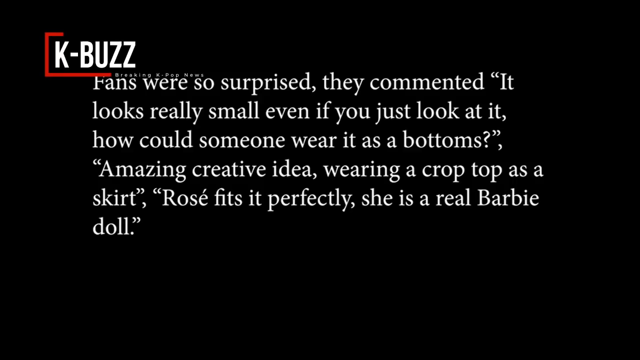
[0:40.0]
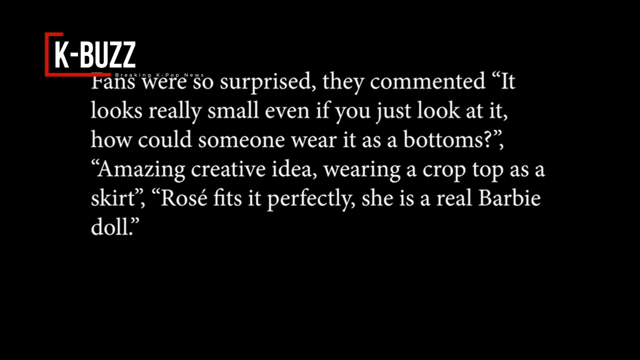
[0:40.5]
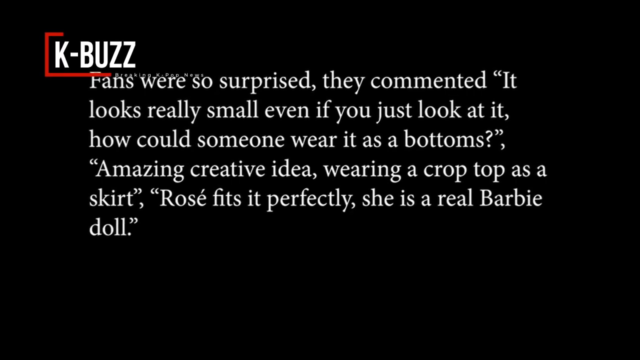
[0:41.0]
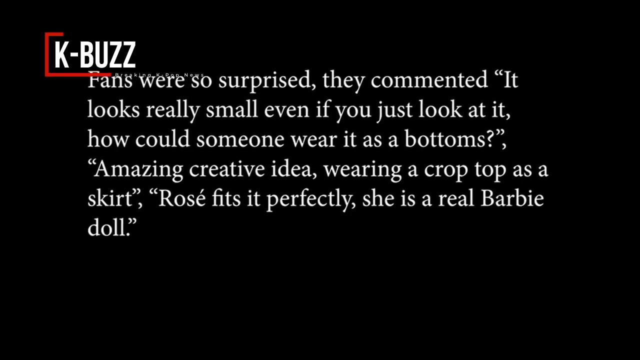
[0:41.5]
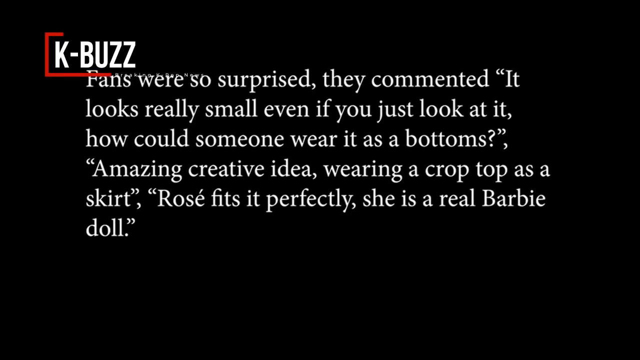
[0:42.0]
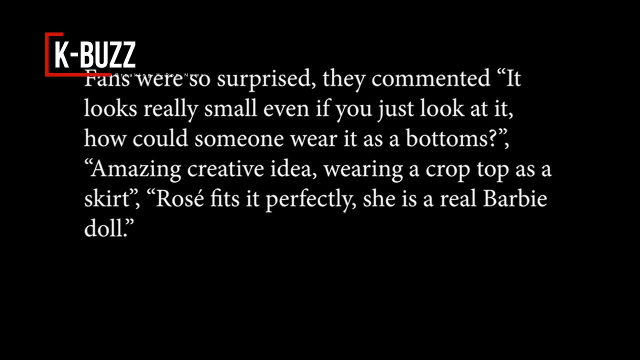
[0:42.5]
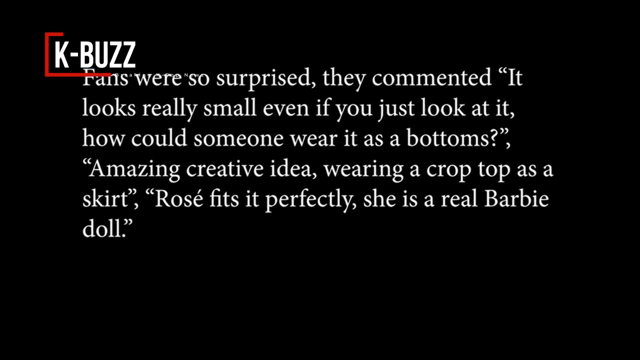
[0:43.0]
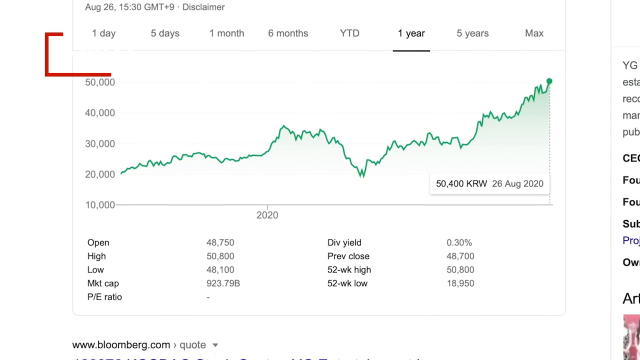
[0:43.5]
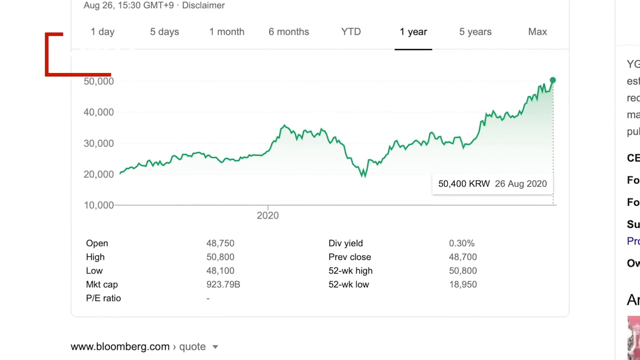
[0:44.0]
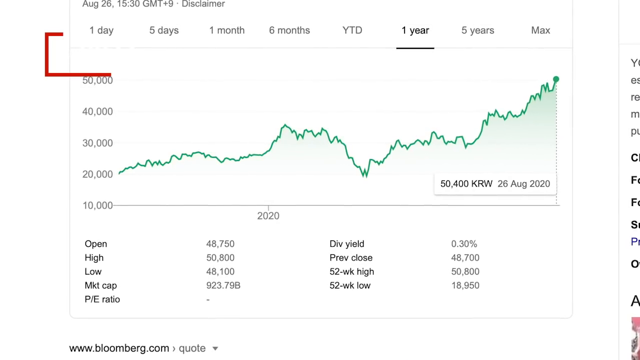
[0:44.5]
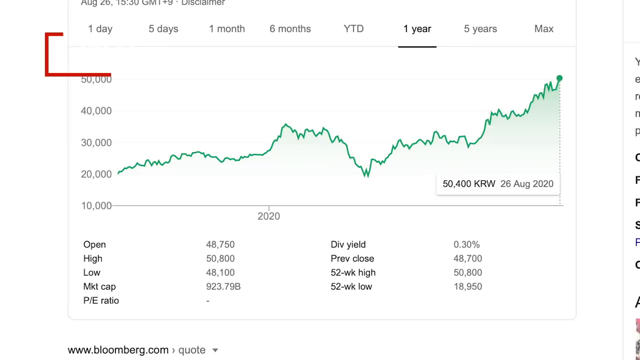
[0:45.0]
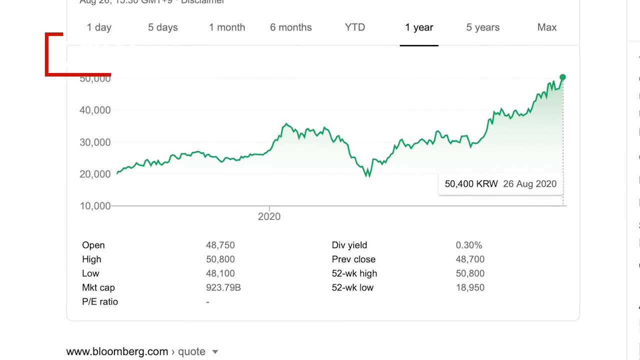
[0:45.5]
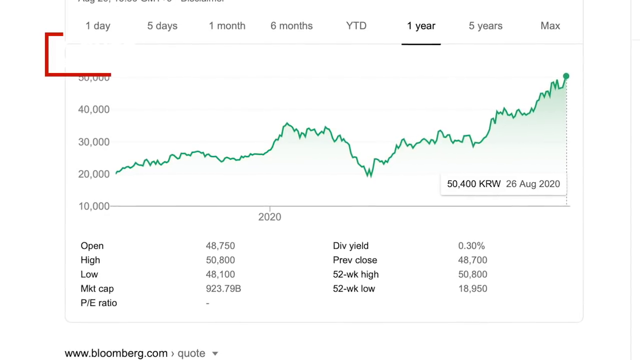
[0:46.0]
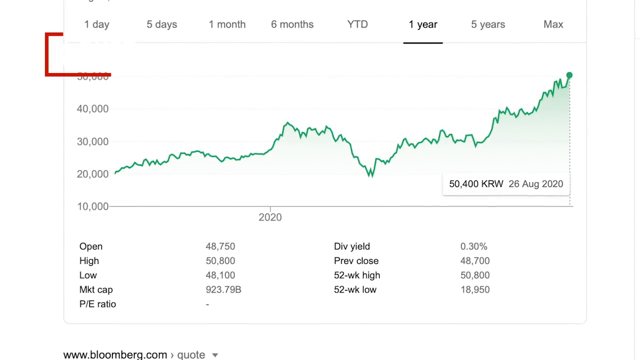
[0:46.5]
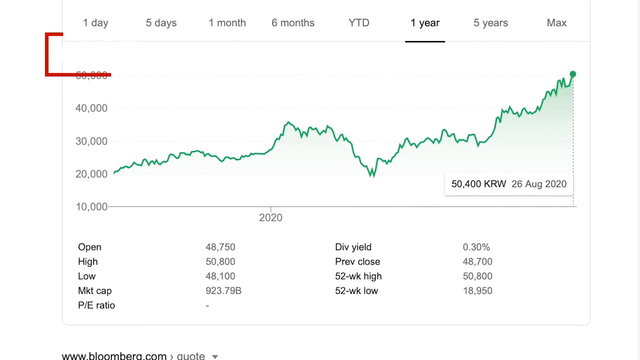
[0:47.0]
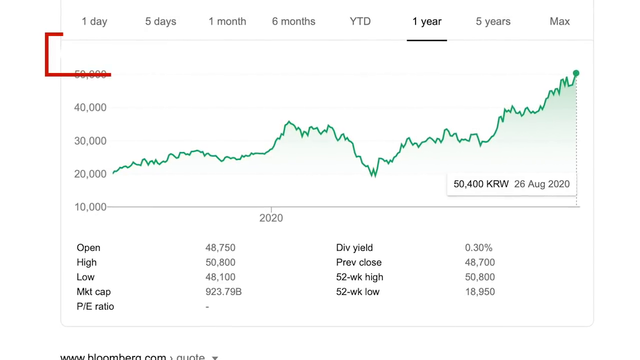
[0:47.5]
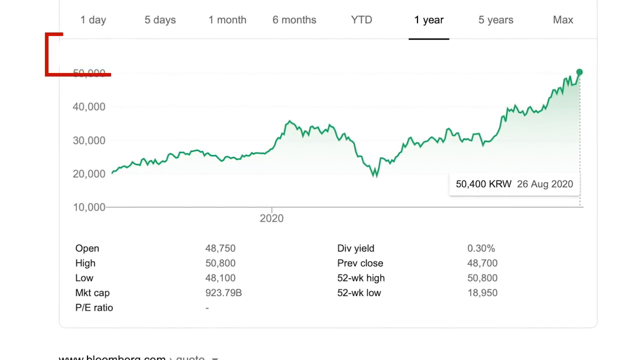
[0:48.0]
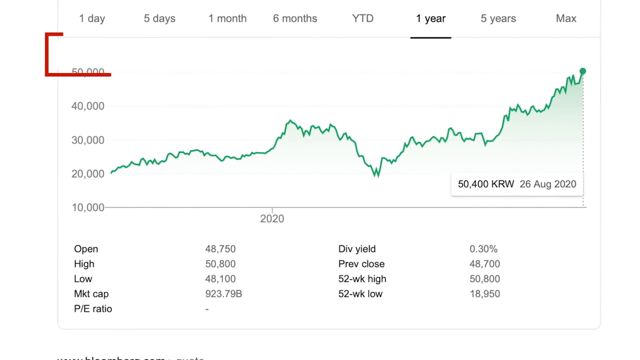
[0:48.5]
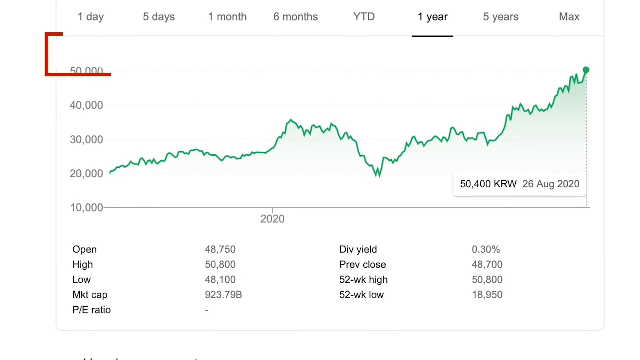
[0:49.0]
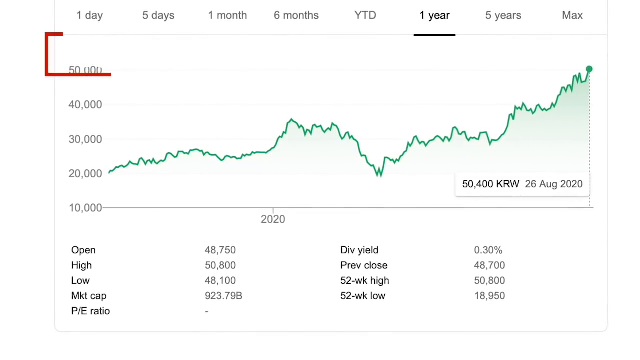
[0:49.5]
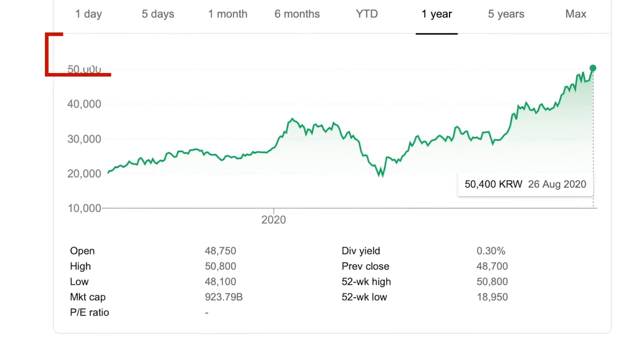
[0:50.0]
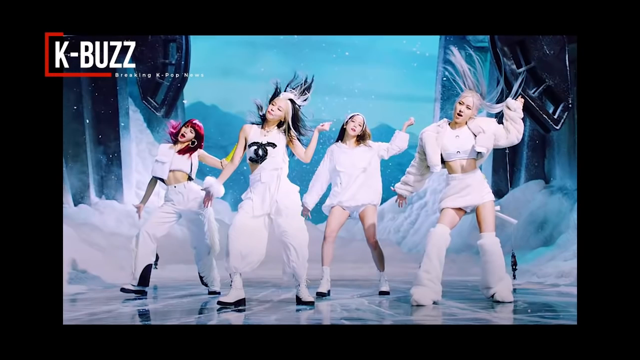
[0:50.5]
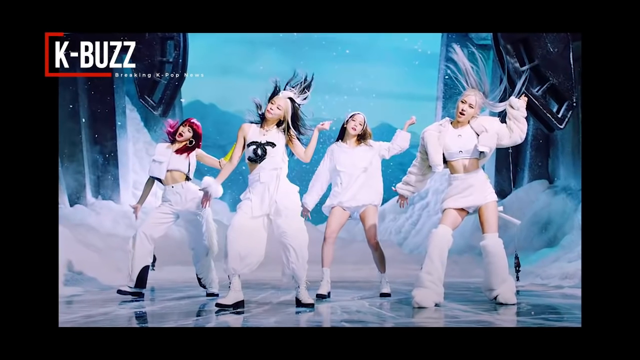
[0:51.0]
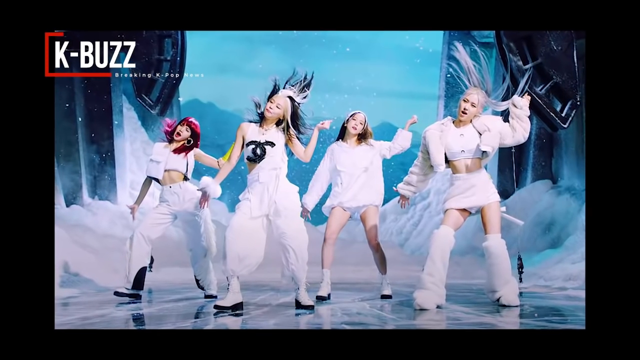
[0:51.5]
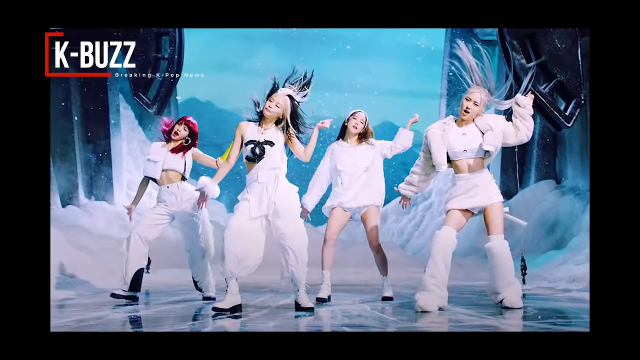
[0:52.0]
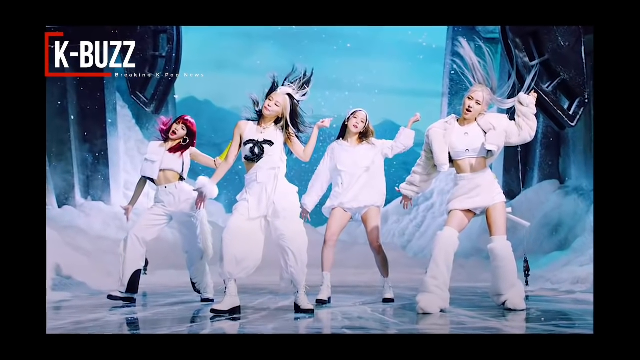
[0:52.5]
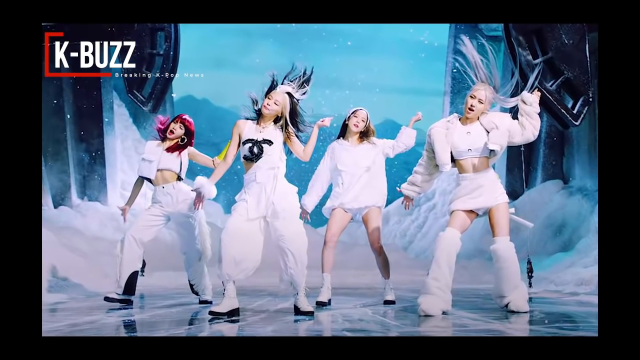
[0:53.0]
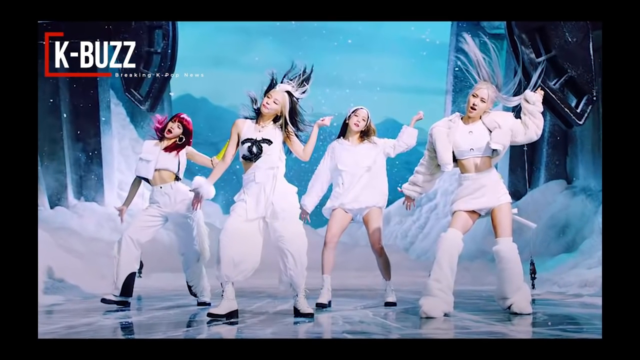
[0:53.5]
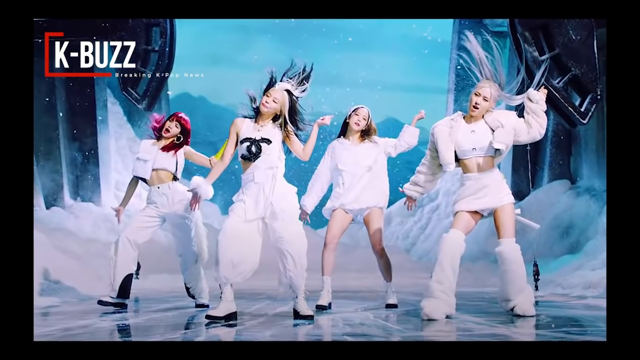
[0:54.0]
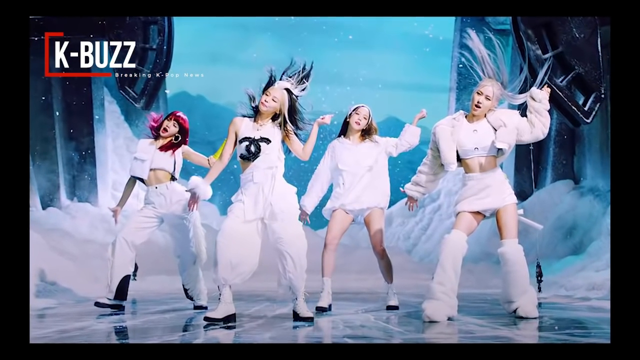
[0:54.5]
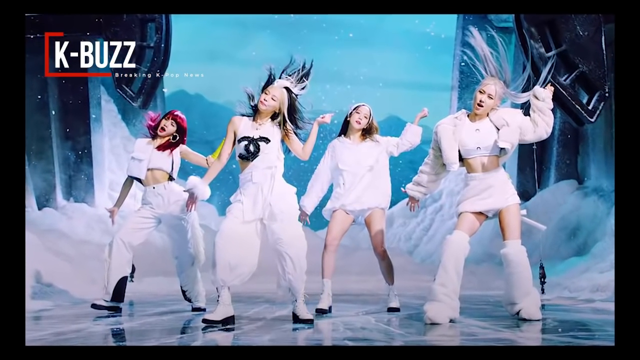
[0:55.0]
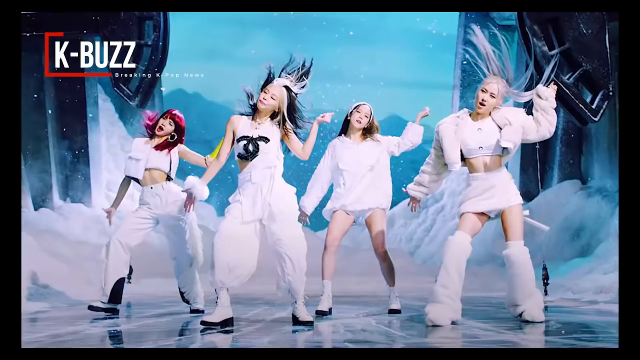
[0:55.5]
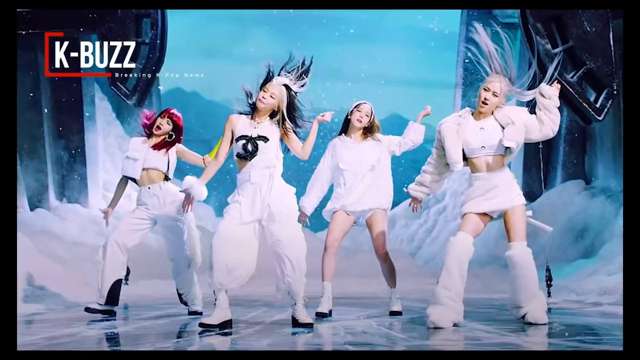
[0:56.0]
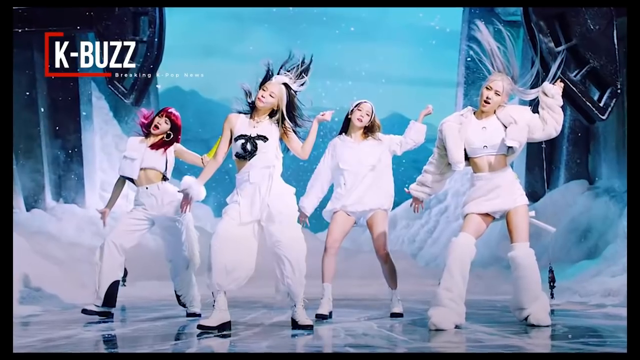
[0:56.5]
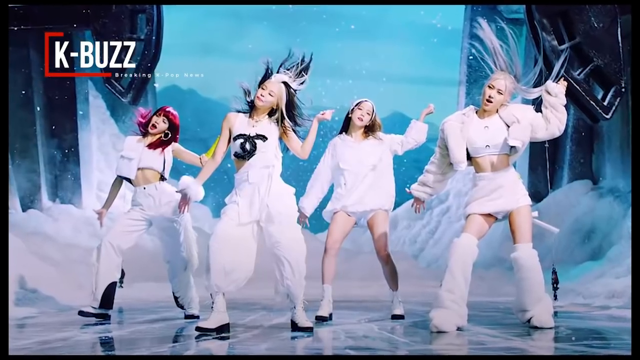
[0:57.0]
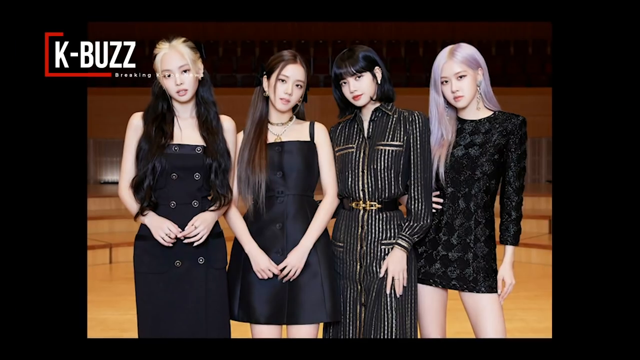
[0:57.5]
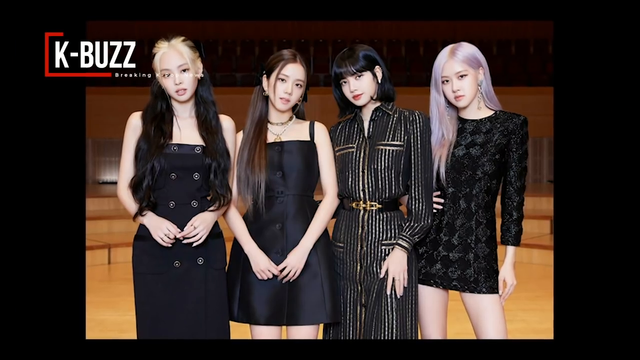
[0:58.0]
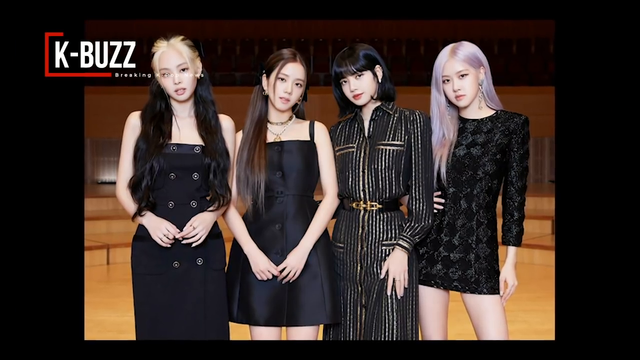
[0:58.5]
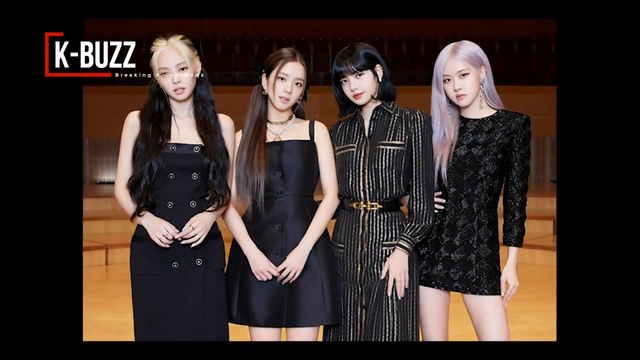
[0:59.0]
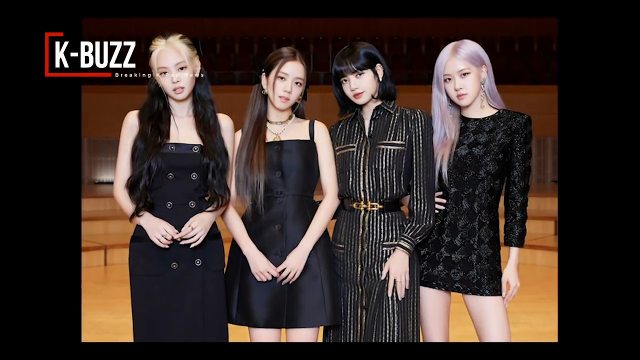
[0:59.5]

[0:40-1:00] The video cuts to what appears to be Google Trends for the Korean won, South Korea's currency. Text is on the screen along with a chart of the currency's value, which goes up to 2400 on August 26, 2020; the graph covers a year. Members of Blackpink then appear on stage wearing white outfits, and the view zooms in on the outfits. It cuts to another photo of Blackpink, all wearing black outfits, aligned left to right and looking center at the camera. The video zooms in on them, showing that the outfits are very intricate. The woman on the left has eight visible buttons, with possibly two more covered by her hand. To her right, a woman in a black dress has four clearly visible buttons. The woman to the right of her wears an outfit that is almost like a jumpsuit but apparently is not one, with a white pattern of kind of dotted lines and black non-dotted lines. On the right is Rosé, wearing something with a spherical gray pattern with black.